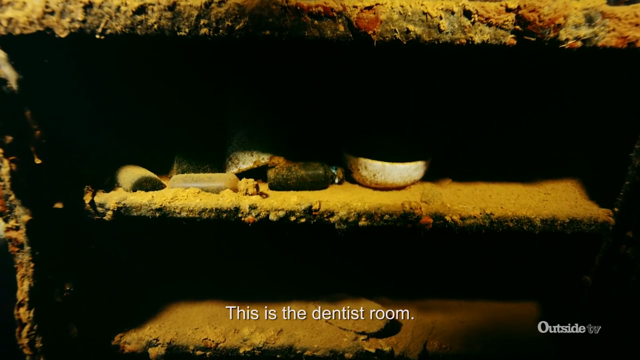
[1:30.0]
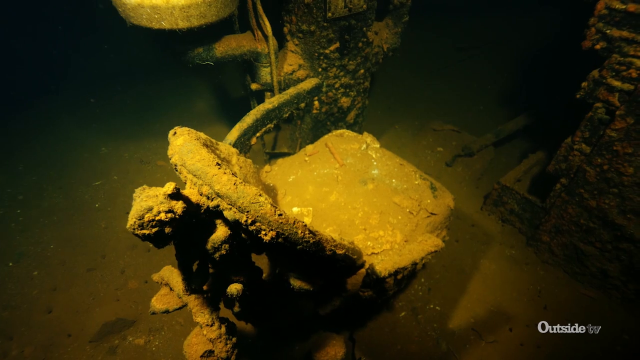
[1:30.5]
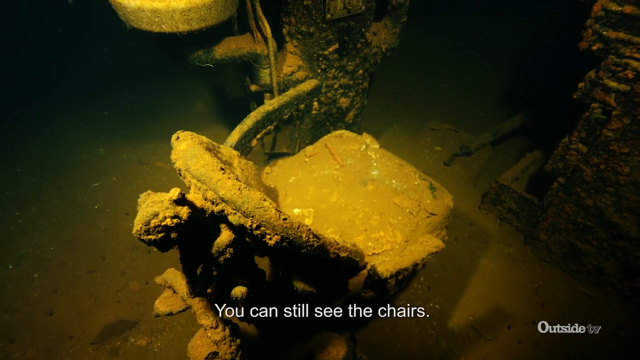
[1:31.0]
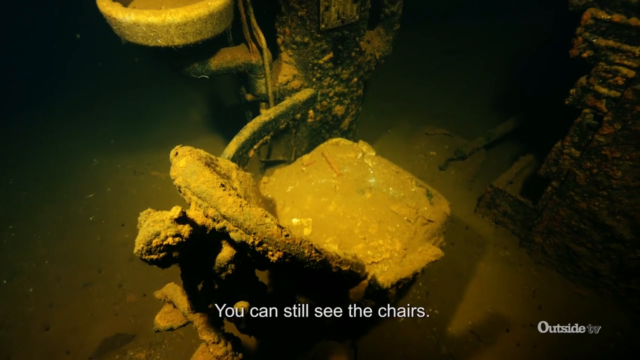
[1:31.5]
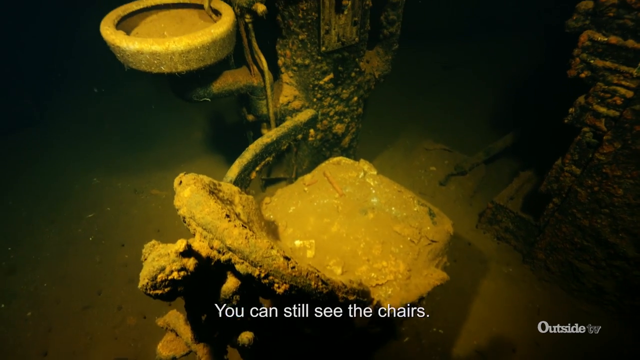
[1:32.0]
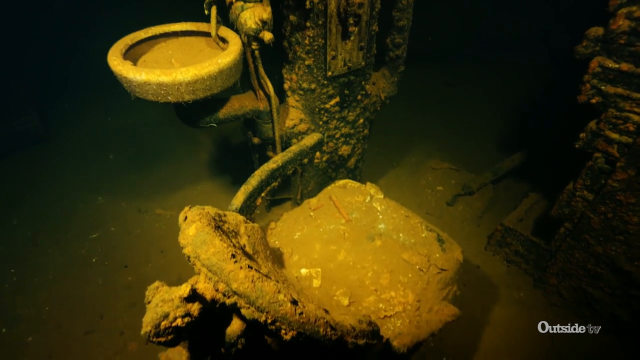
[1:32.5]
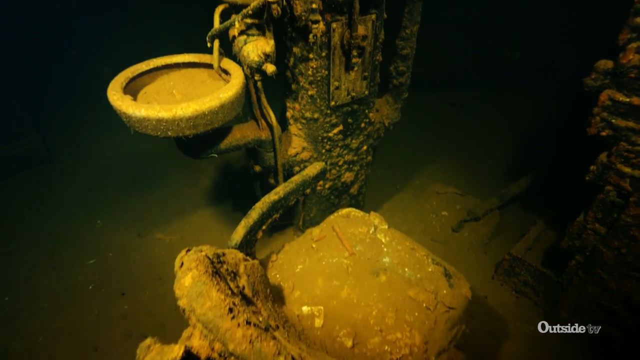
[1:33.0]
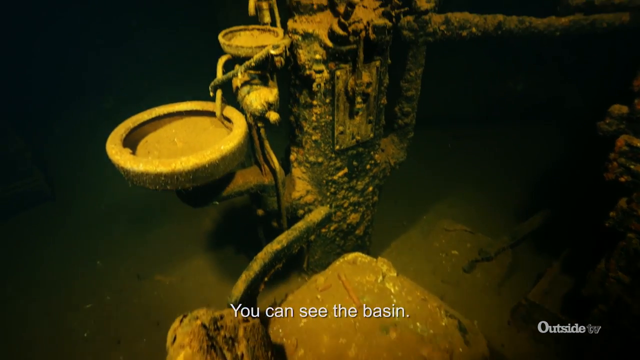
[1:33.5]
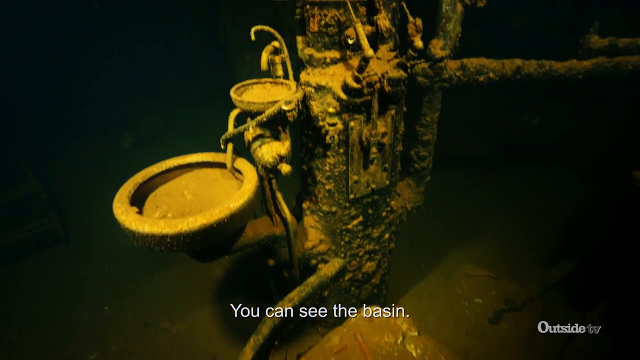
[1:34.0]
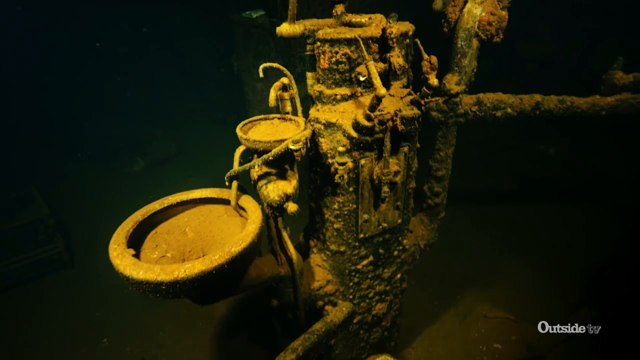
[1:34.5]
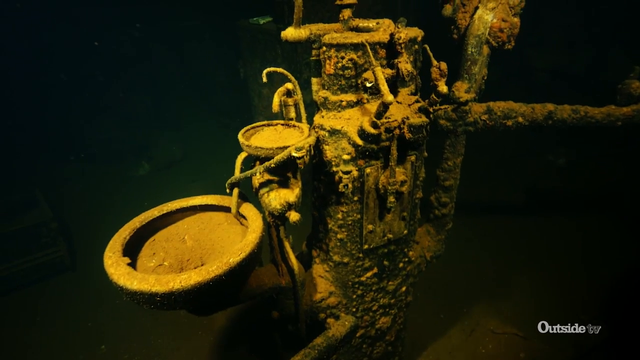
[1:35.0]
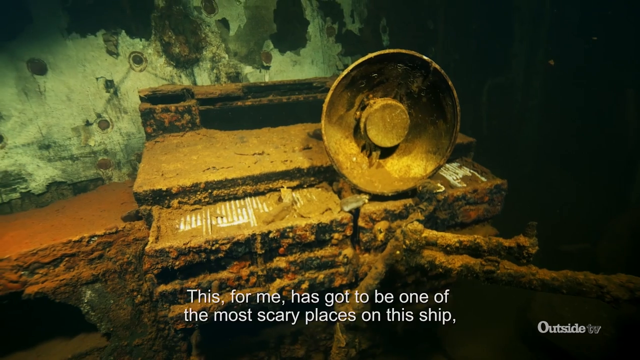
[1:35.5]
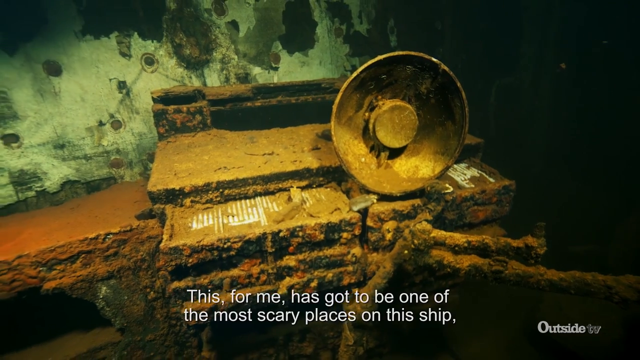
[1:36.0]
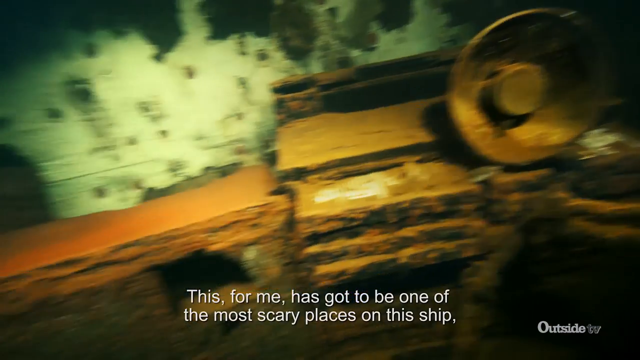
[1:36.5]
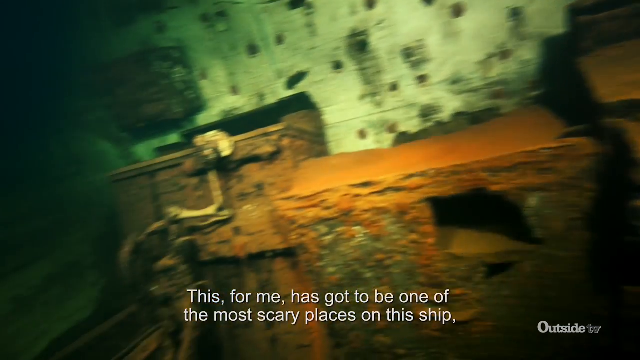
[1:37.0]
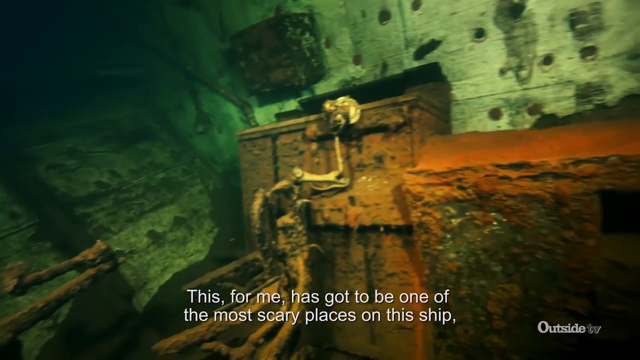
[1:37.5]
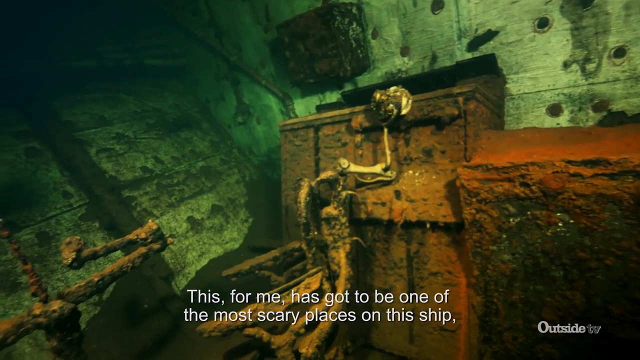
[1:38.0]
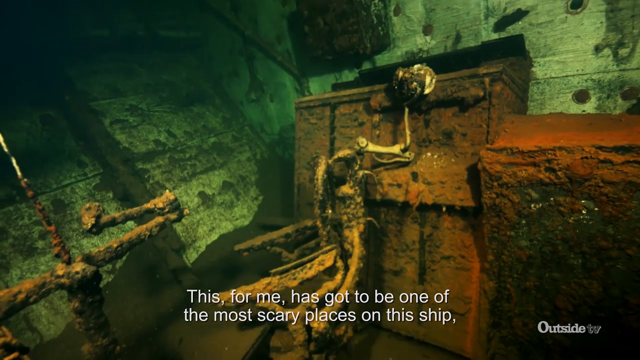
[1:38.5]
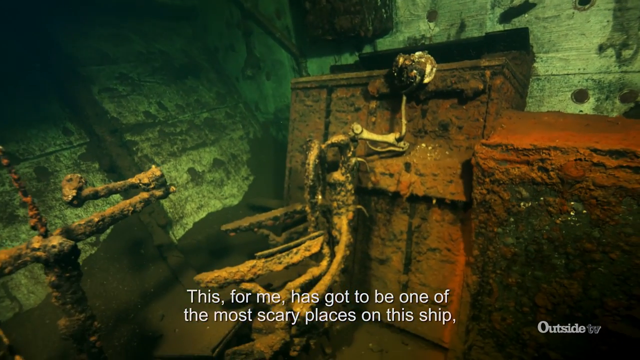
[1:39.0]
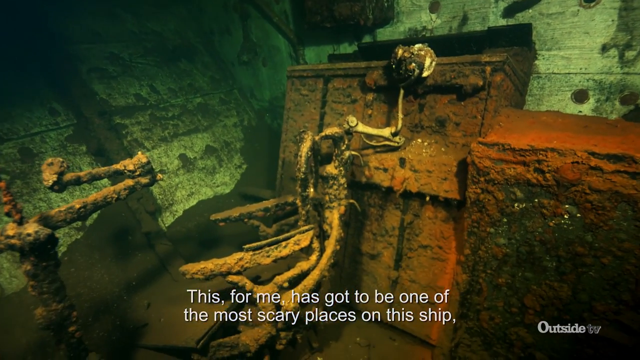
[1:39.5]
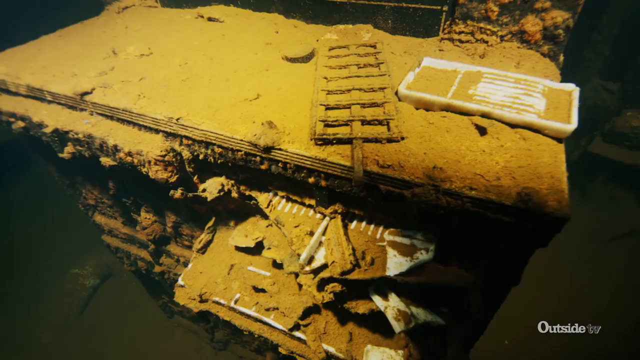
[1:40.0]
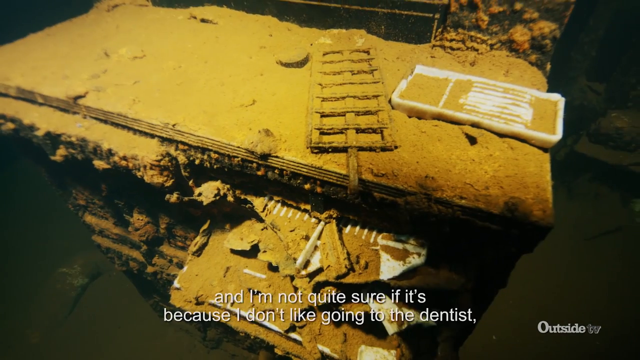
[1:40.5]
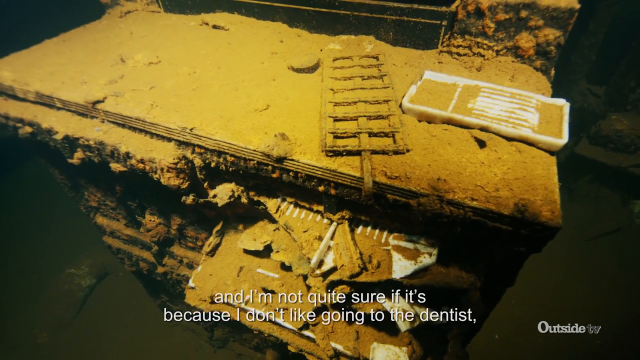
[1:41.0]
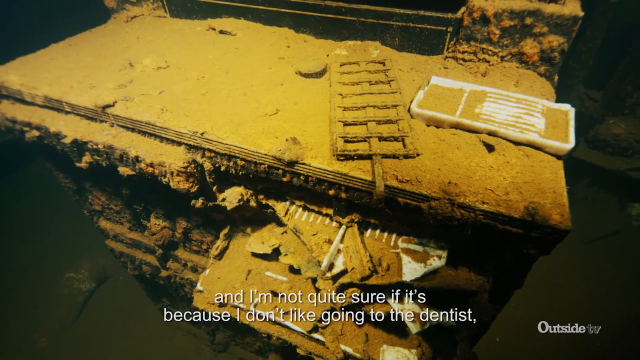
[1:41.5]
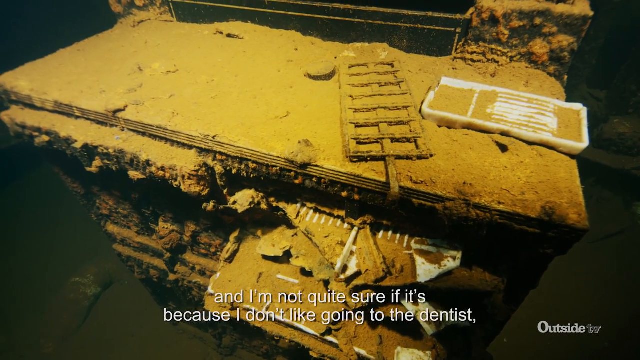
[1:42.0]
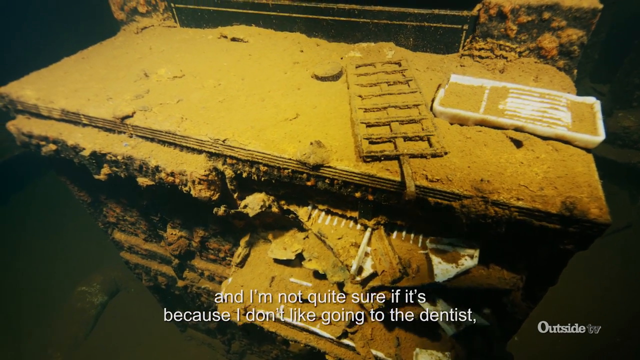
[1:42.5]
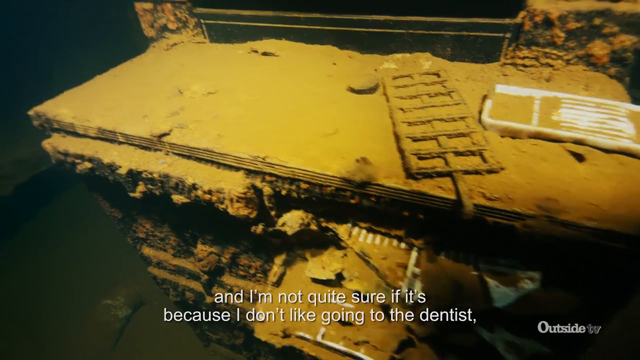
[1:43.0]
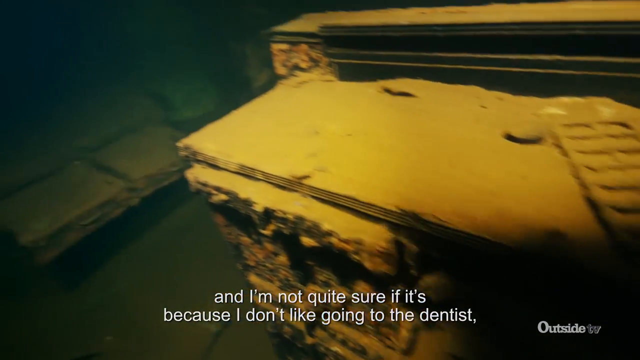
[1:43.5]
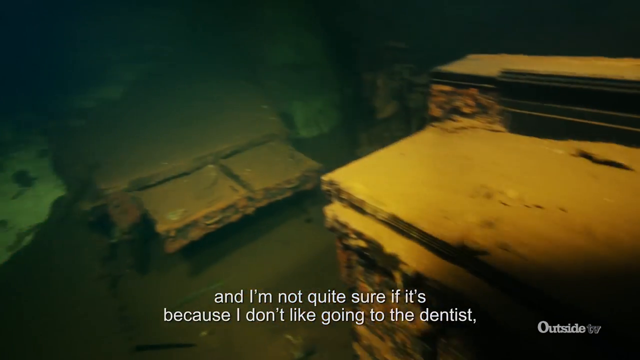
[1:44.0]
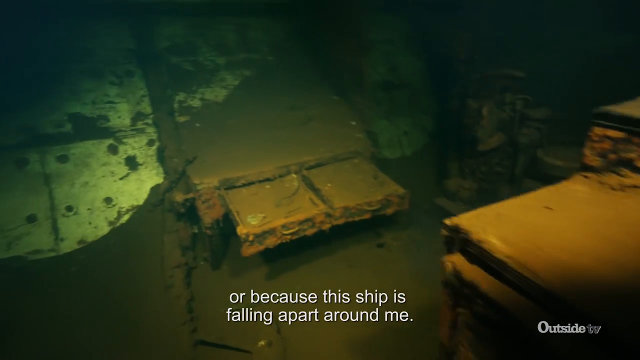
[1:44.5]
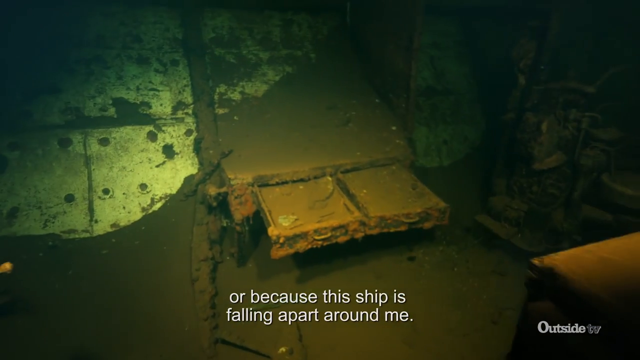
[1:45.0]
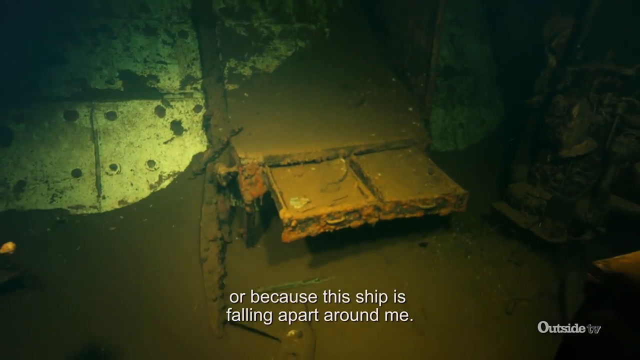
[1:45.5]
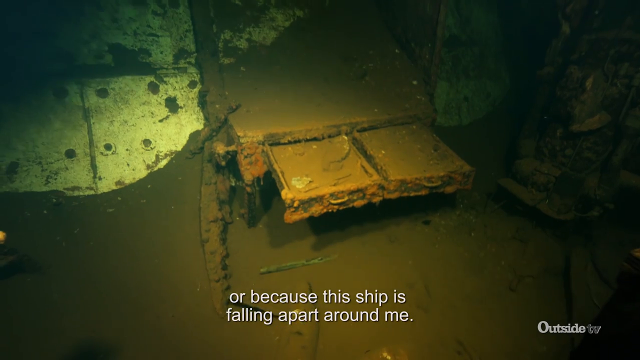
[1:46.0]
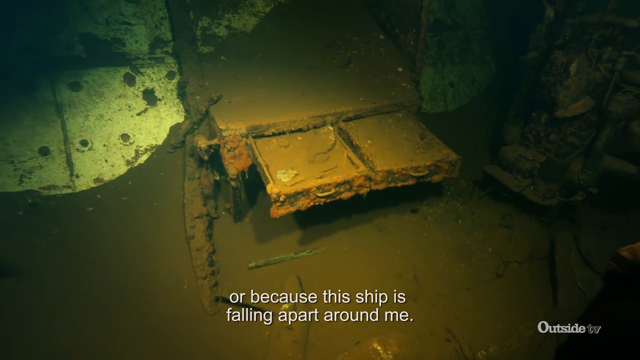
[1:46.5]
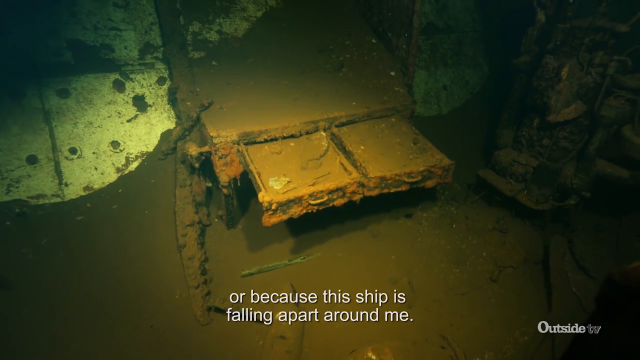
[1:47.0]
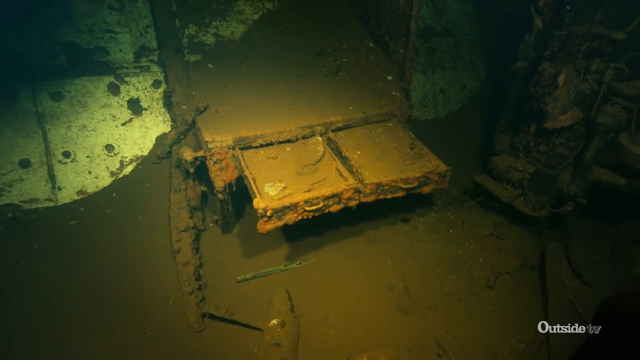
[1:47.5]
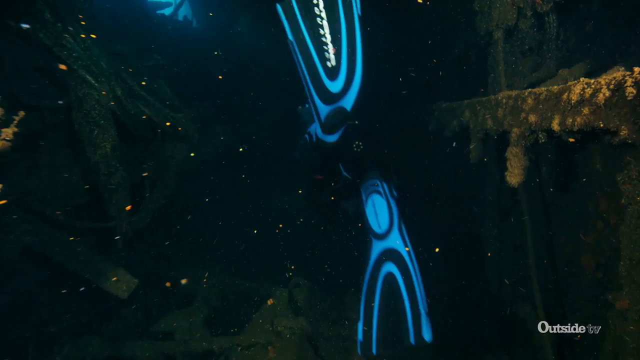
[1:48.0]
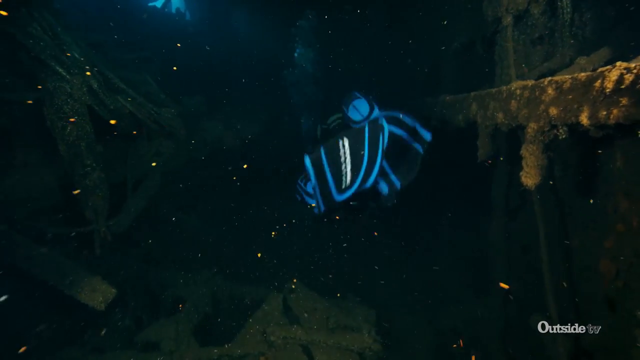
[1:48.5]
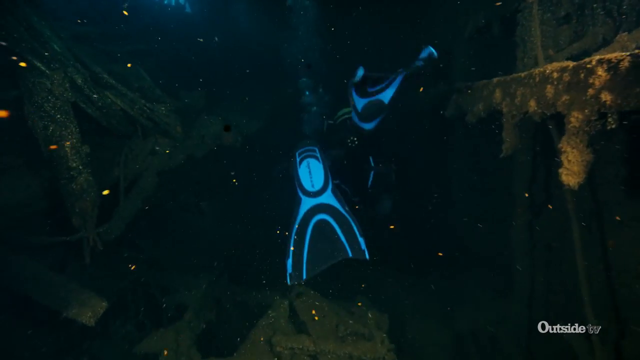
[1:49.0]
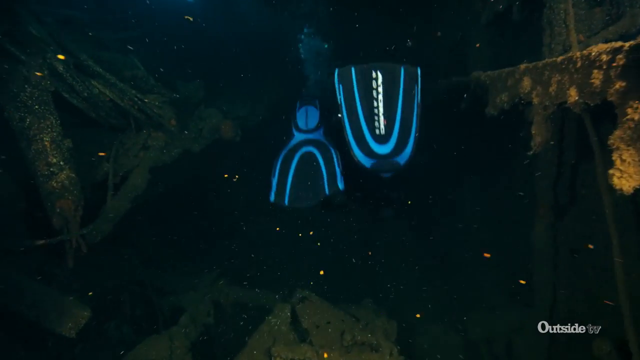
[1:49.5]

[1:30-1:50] A close-up shows an underwater cabinet ruined by years in the ocean, with white text reading "This is the dentist room." The shot cuts to a chair in the ship with white text reading "You can still see the chairs. You can still see the basin. This, for me, has got to be one of the most scary places on this ship," Other images from inside the ship follow, including various items and chairs in the room, with white text stating "and I'm not quite sure if it's because I don't like going to the dentist, or because the ship is falling apart around me." More underwater items are shown, such as cabinets with their drawers pulled out, as well as the back of a man in scuba diving gear whose blue and black flippers move through the water.